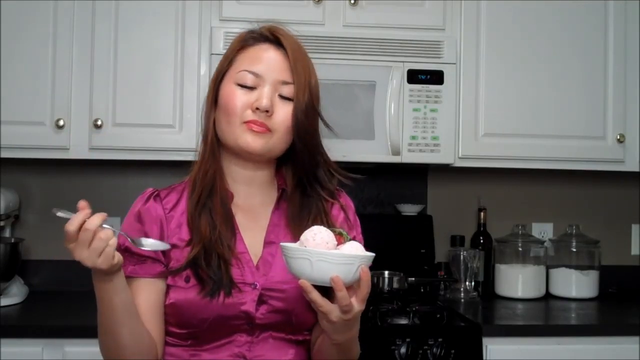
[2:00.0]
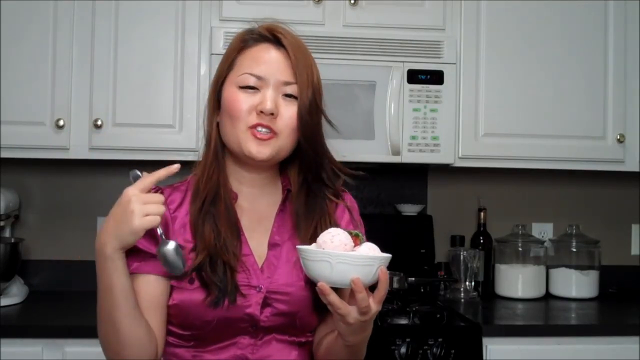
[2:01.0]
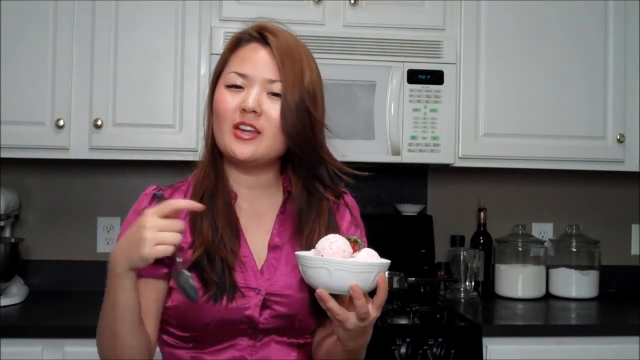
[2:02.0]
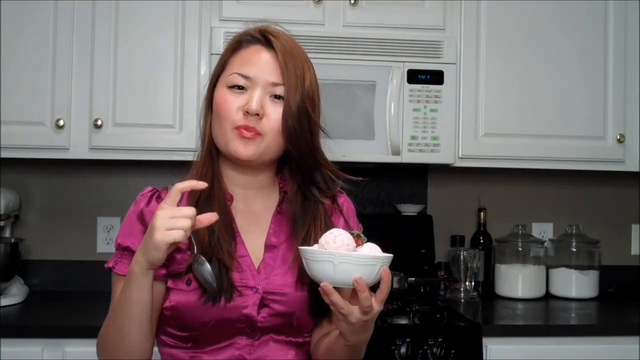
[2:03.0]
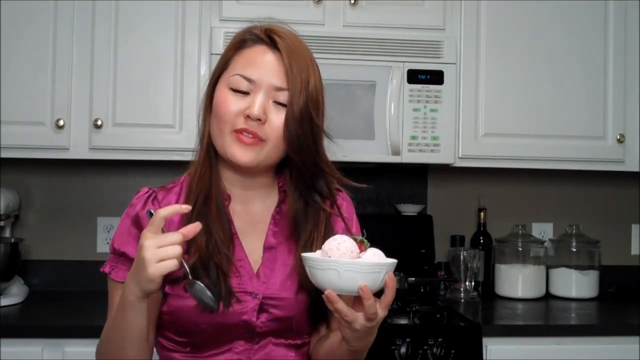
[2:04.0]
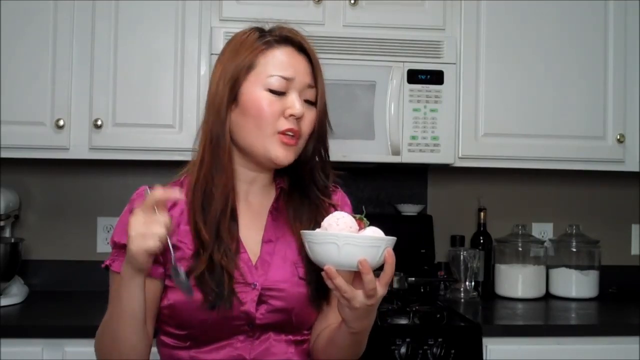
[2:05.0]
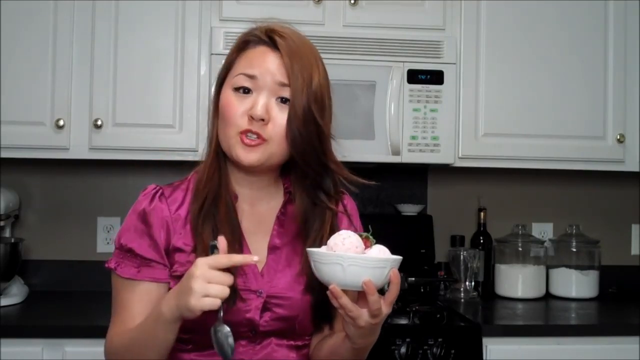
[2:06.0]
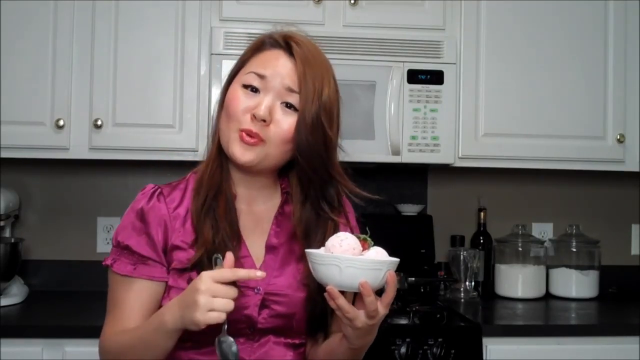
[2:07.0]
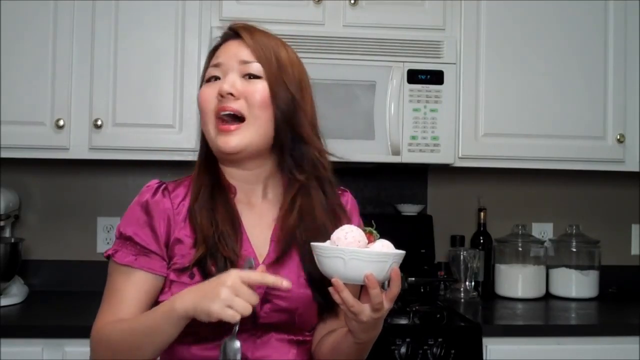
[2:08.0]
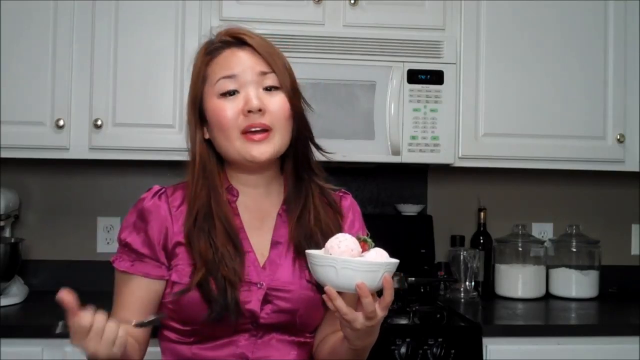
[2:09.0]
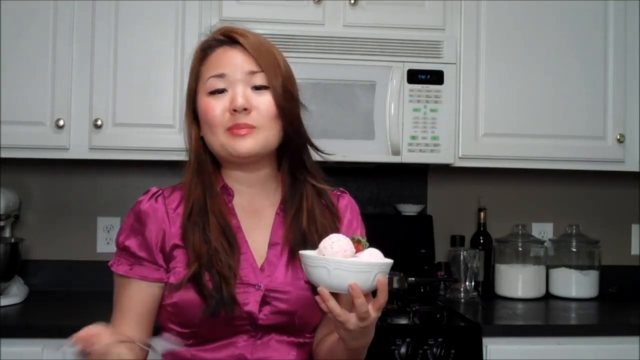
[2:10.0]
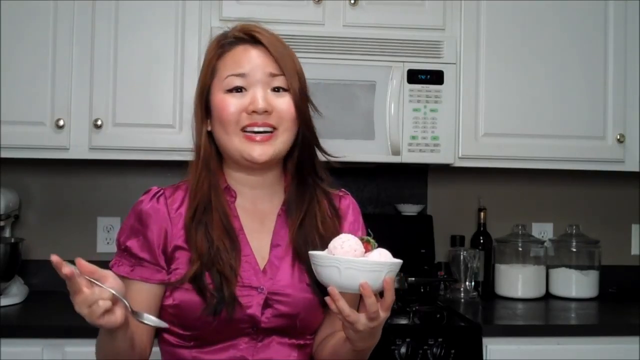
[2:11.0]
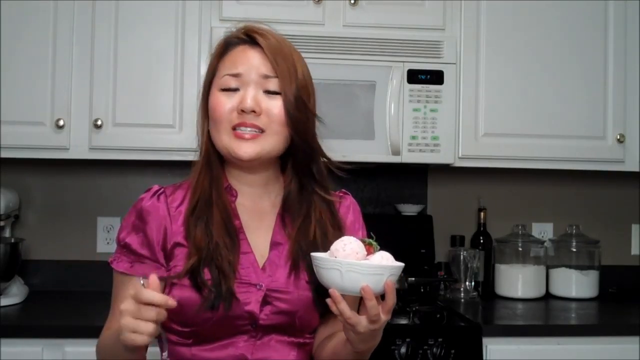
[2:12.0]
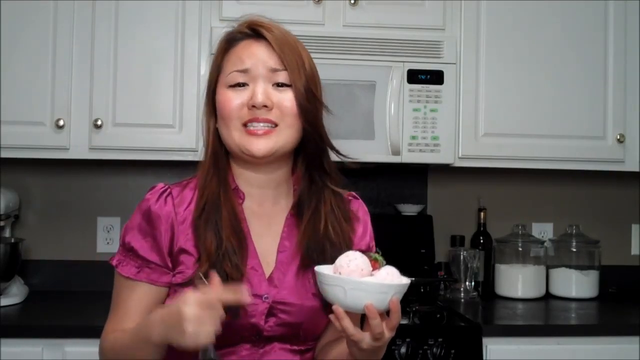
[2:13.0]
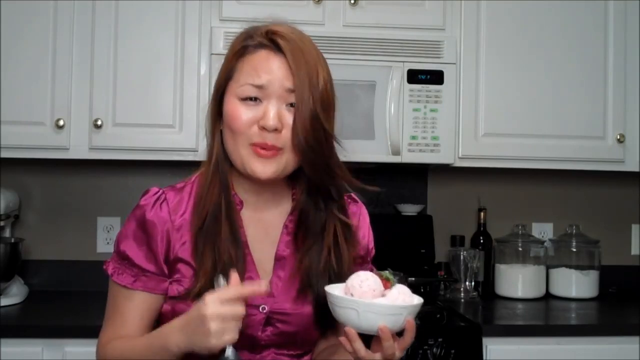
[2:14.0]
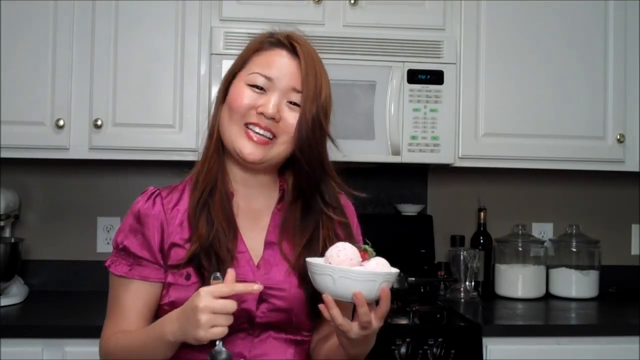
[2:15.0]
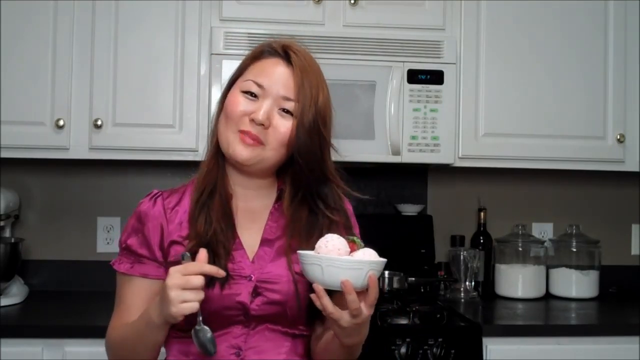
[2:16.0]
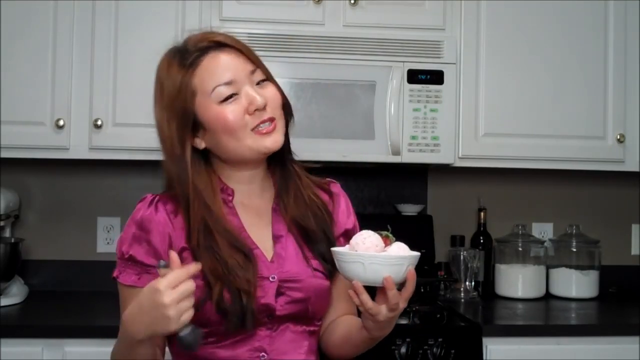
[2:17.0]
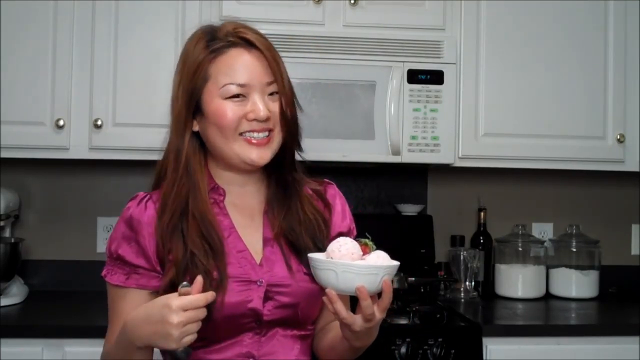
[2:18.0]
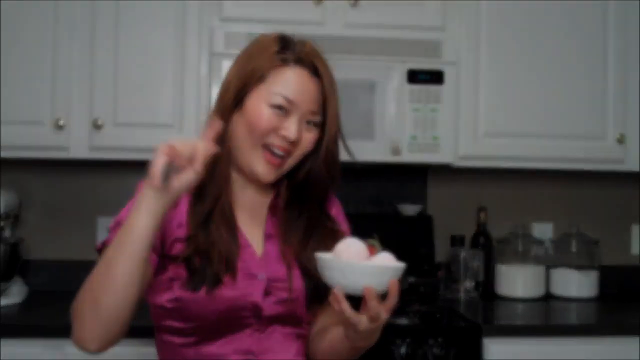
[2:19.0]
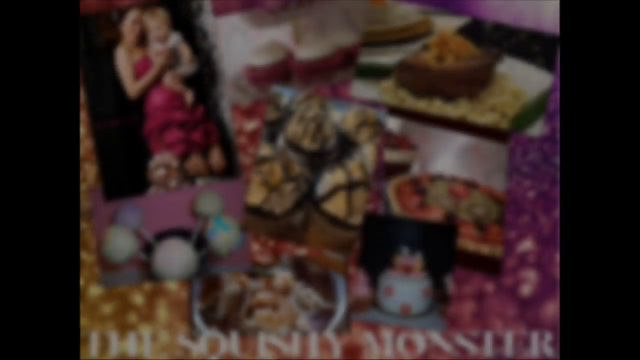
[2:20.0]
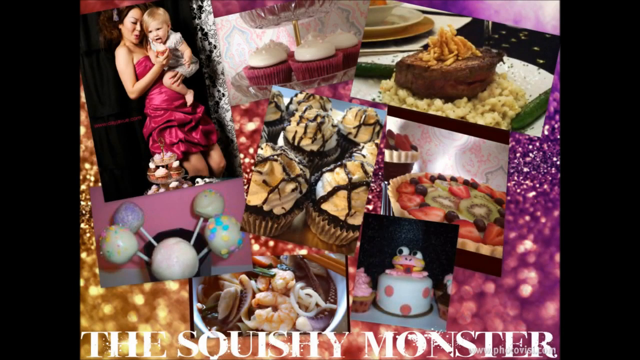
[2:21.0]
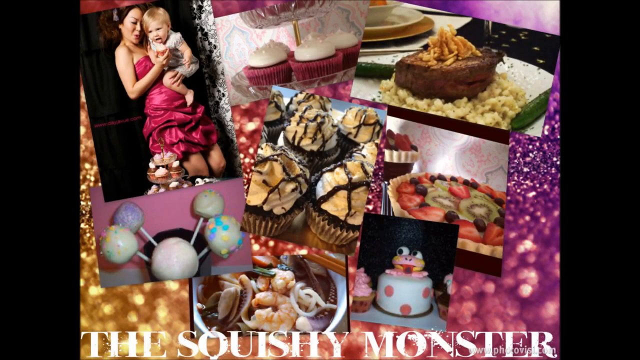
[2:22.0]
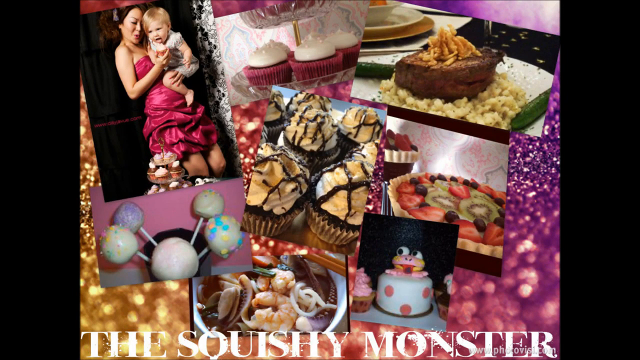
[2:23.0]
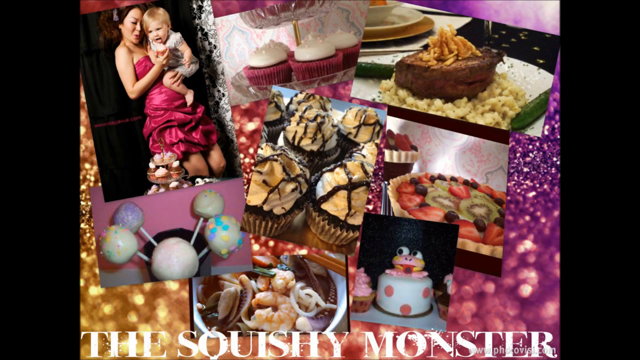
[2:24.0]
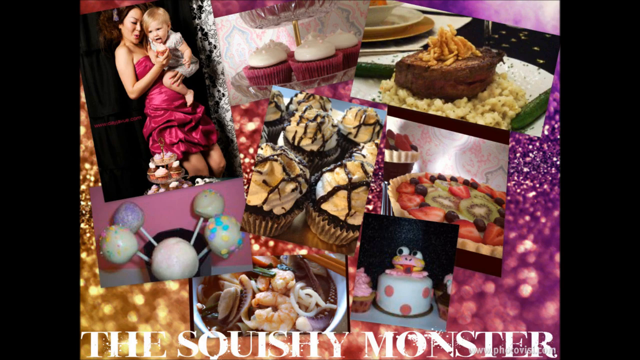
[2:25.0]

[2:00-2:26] A woman stands in her kitchen holding, in her left hand, a white bowl with scoops of what looks like ice cream and a strawberry in it, and a spoon in her right hand. She speaks to the camera and keeps pointing to the bowl of ice cream, occasionally making faces indicating that she has tried it and it is delicious. Behind her are white cabinets and a white microwave installed below a cabinet. Below this, the kitchen counter is black, and the range below the microwave is also black. She wears a short-sleeved, shiny fuchsia blouse and has long brown hair. At the end of her segment, she waves to the camera, and the scene switches to a collage of photographs of baked goods: cupcakes, cake pops, what looks like a birthday cake with a frog on top of it, fruit tarts, and a photograph of what looks like the woman herself holding a baby in her left arm and a cupcake in her right hand that the baby is reaching out to lick.